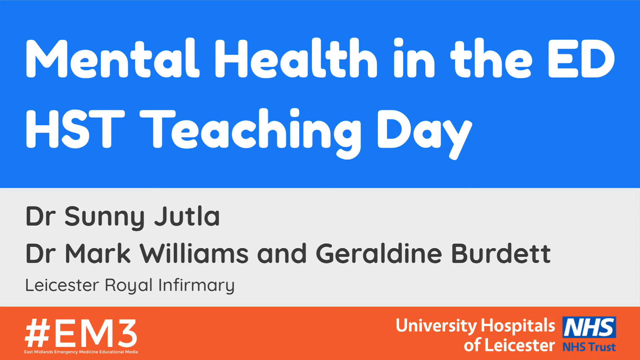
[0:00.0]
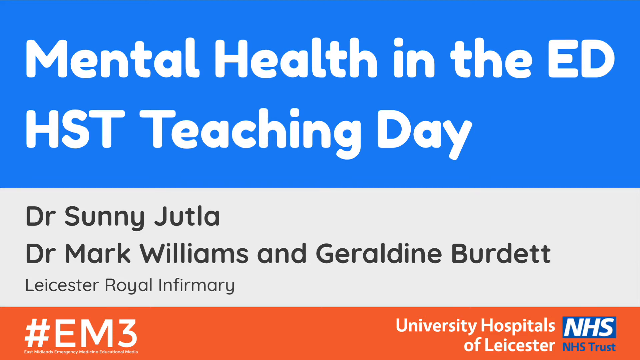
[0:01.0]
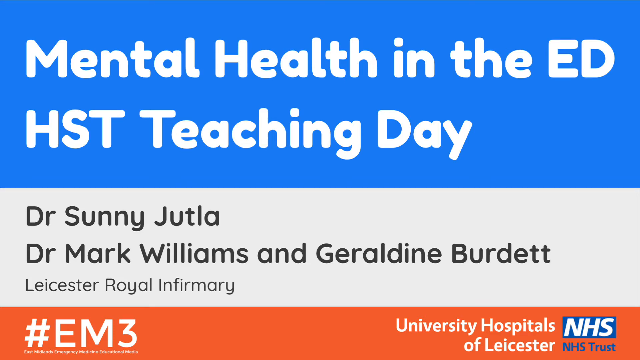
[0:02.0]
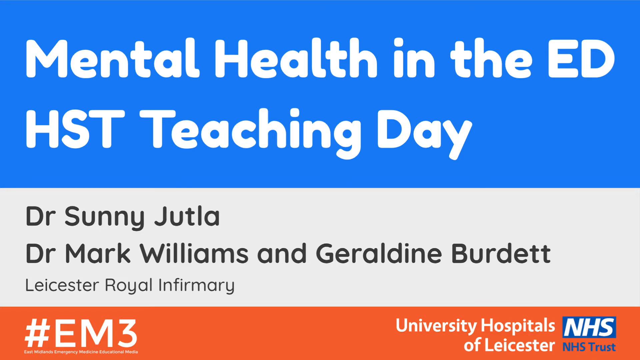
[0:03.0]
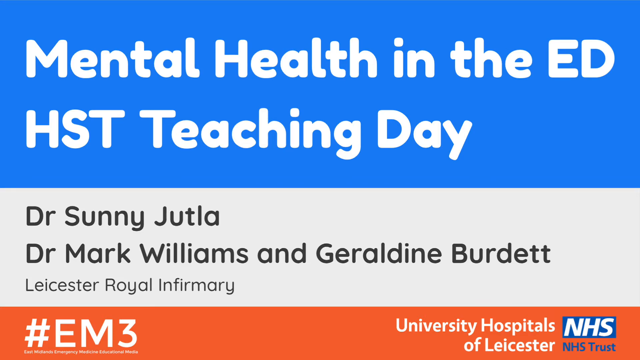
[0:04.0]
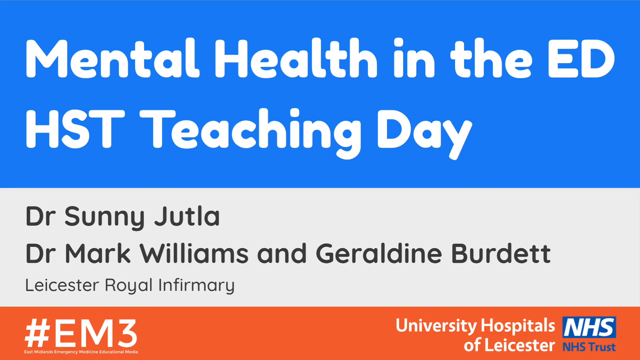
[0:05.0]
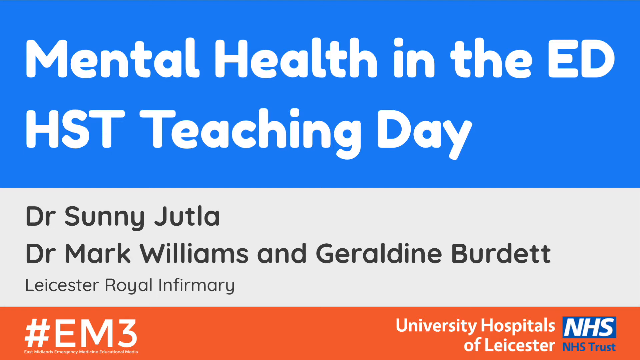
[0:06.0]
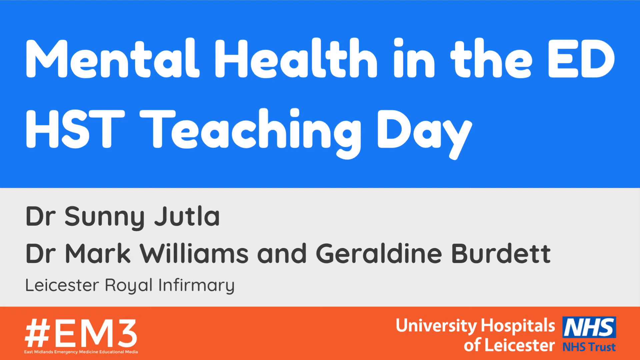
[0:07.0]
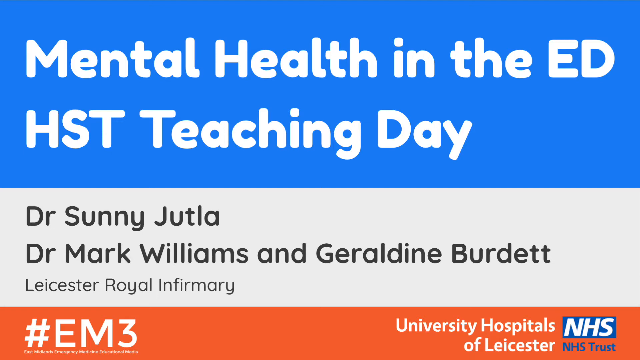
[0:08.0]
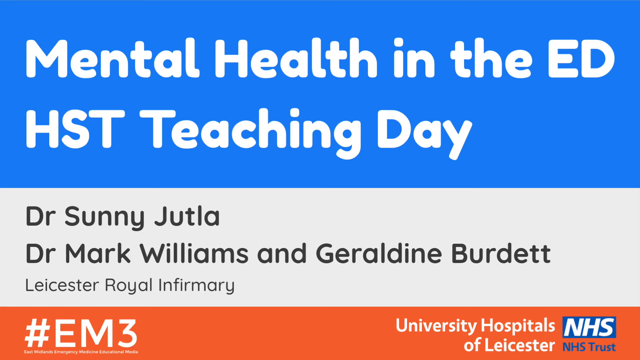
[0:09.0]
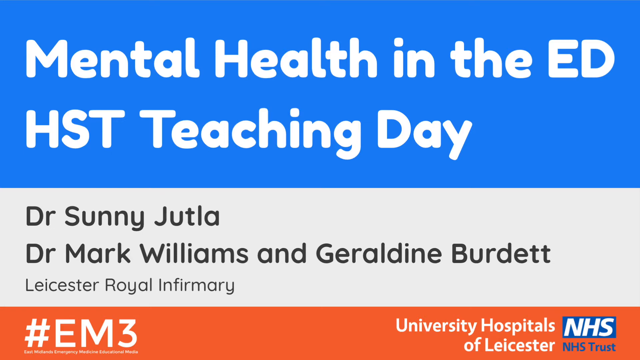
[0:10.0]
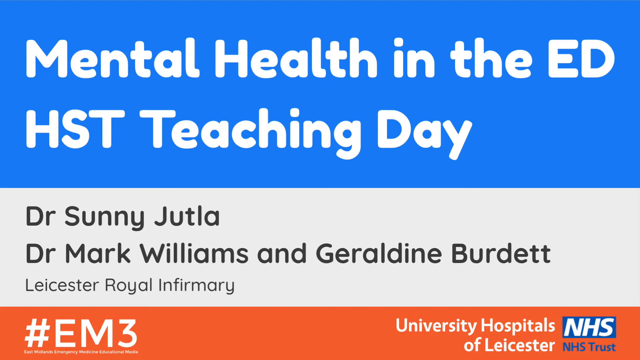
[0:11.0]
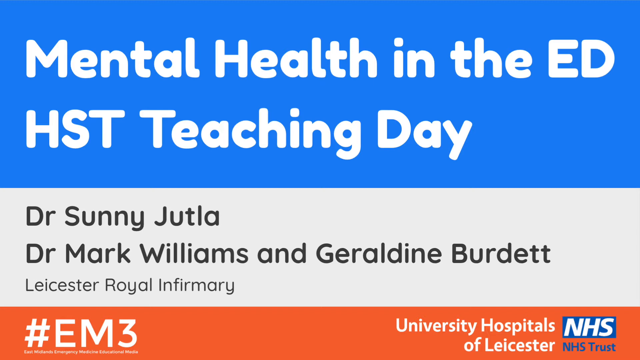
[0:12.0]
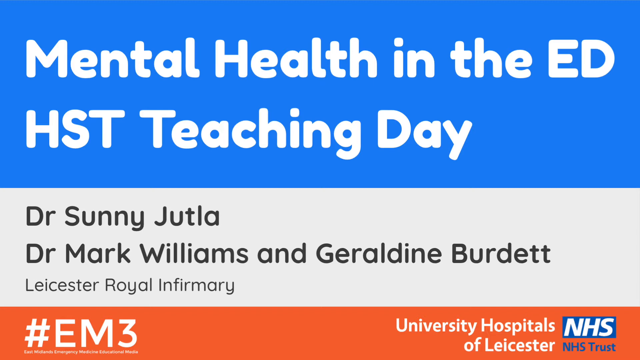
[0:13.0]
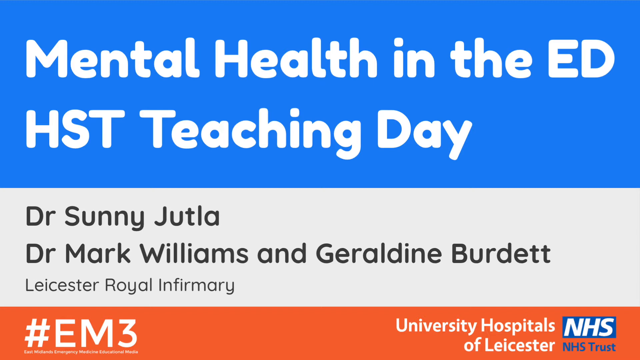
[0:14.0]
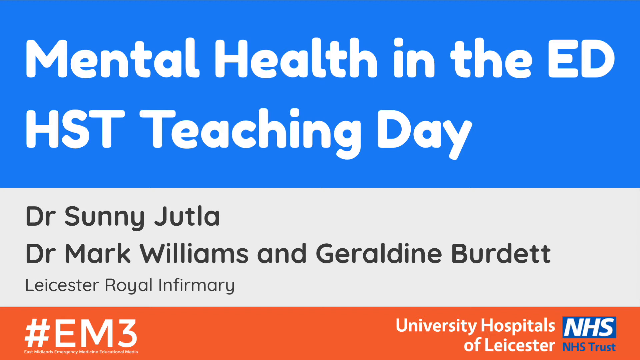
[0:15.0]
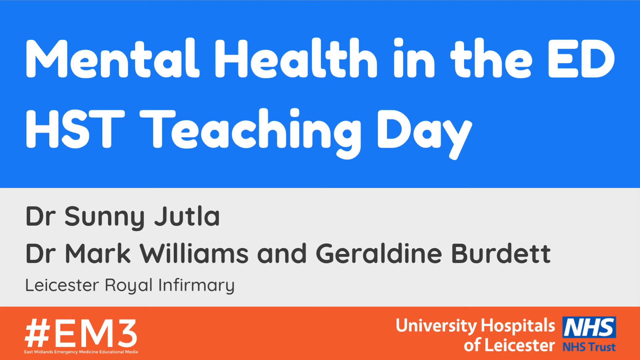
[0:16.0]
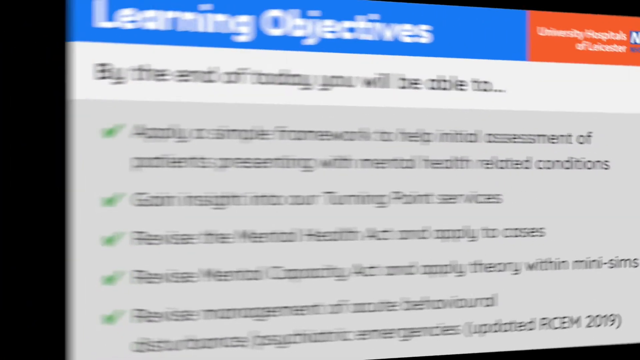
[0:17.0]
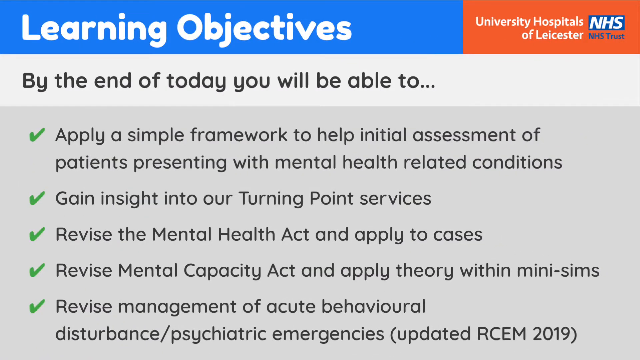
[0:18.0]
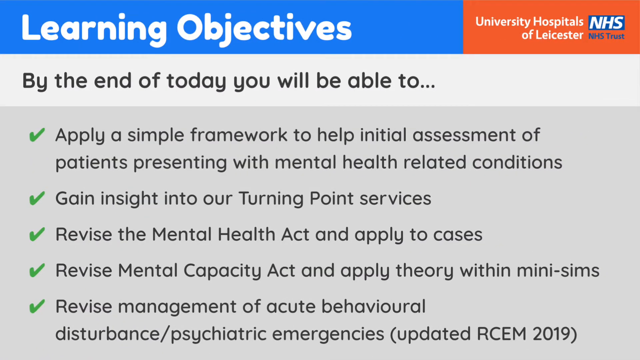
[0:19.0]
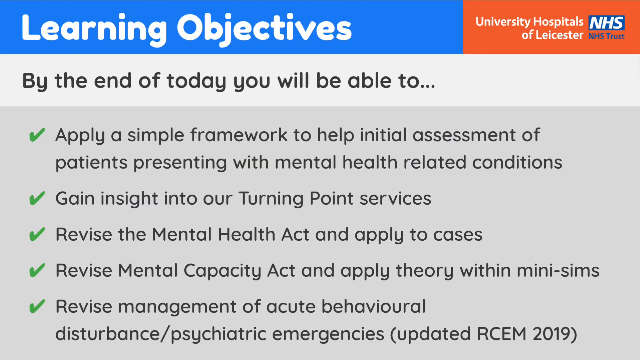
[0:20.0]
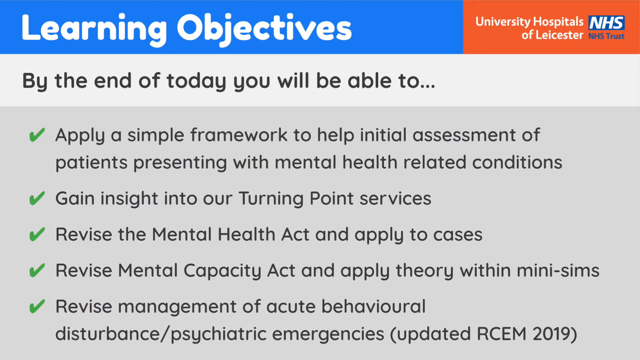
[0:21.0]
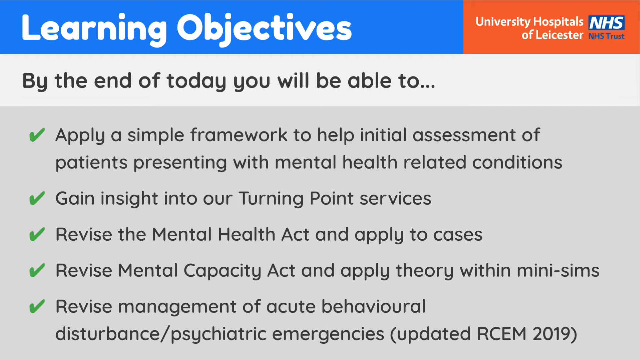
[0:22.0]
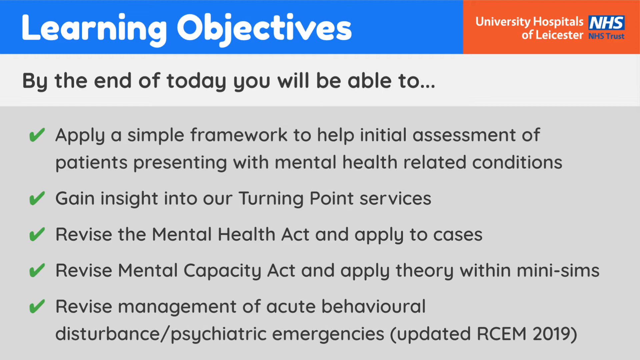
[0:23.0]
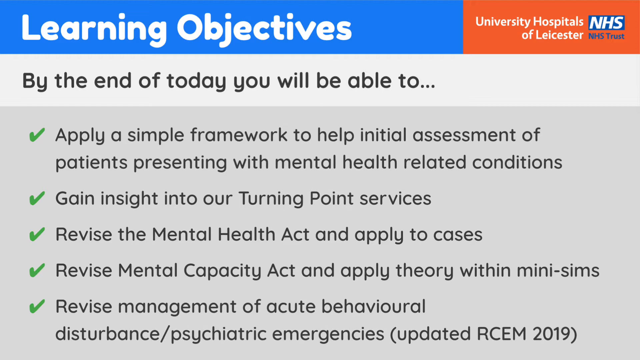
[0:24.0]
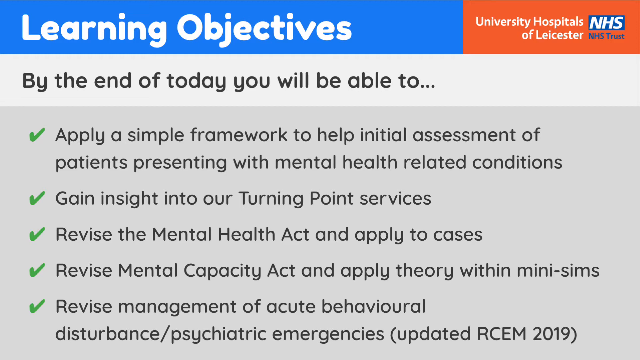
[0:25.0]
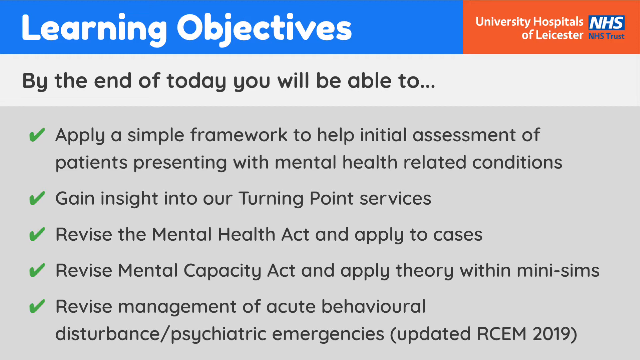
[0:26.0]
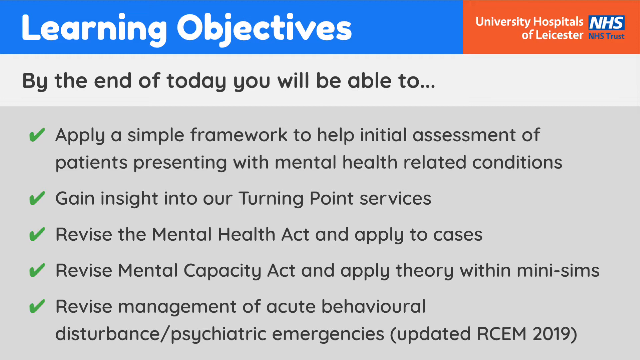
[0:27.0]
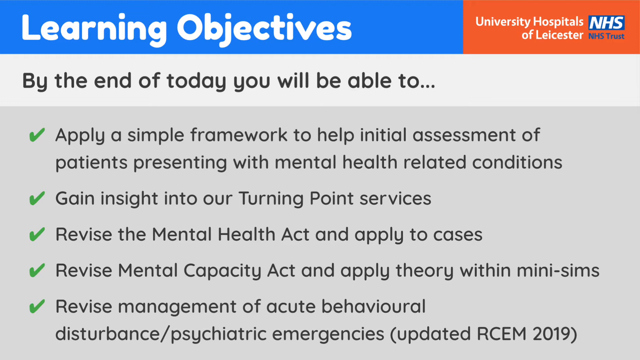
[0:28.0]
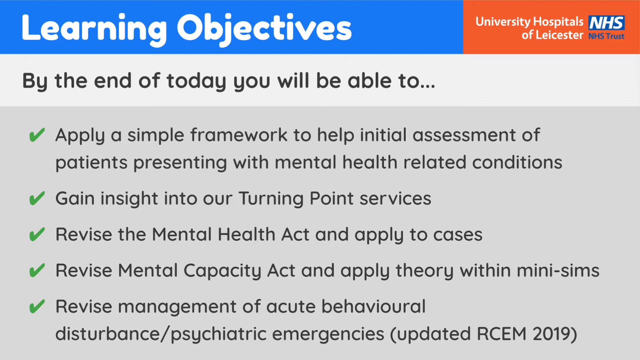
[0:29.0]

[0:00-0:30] A title message reads "Mental Health in the ED, HST Teaching Day", with the names of the doctors presenting the teaching day, the text "#EM3", and University Hospitals of Lancaster. The Lancaster Royal Infirmary is shown, and its NHS logo appears in the upper right-hand corner in a blue box, which is in an orange box. A learning objectives page follows, with "learning objectives" in a blue box at the top of the page and, in a gray box, "By the end of the day, you'll be able to" followed by a list of items including "apply framework", "gain insights", "revise mental health" and "revise mental capacity", with more items listed after them.